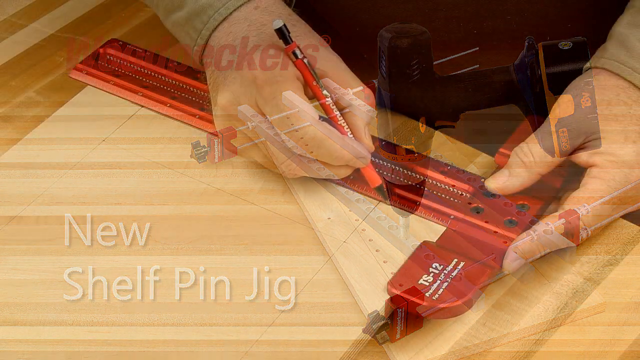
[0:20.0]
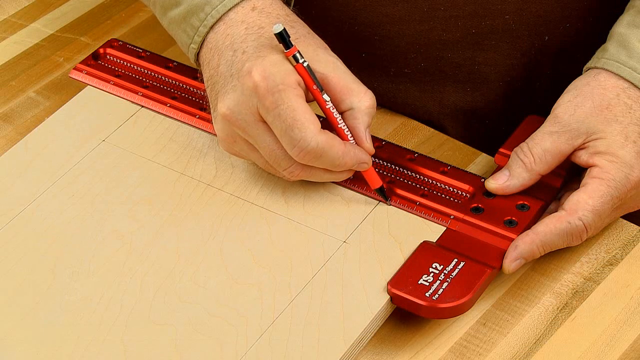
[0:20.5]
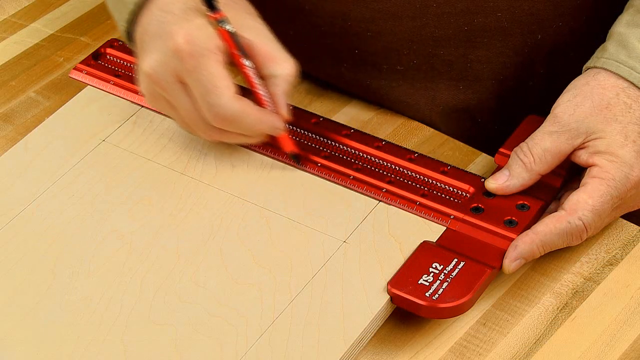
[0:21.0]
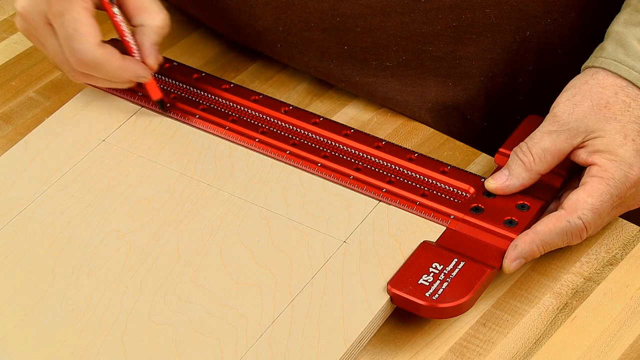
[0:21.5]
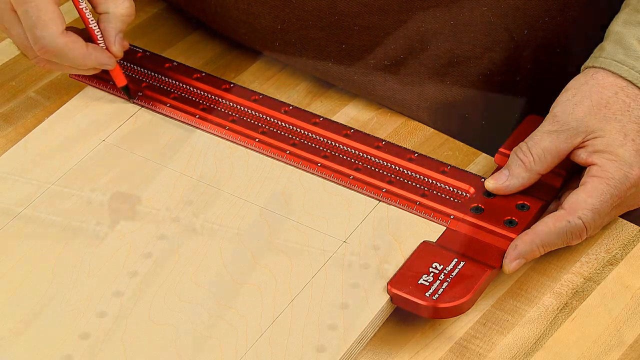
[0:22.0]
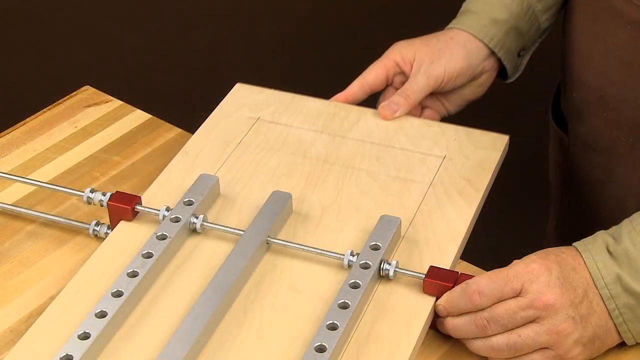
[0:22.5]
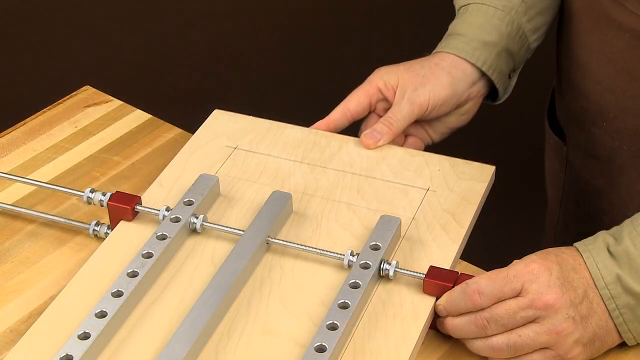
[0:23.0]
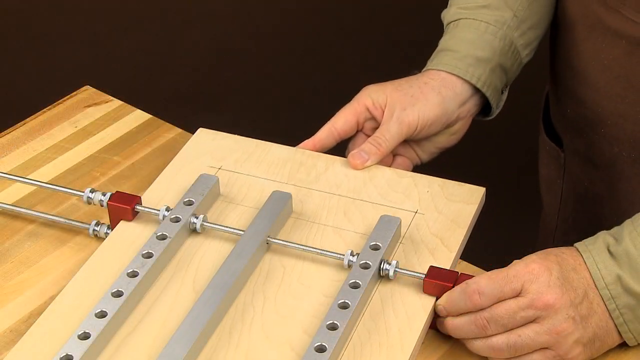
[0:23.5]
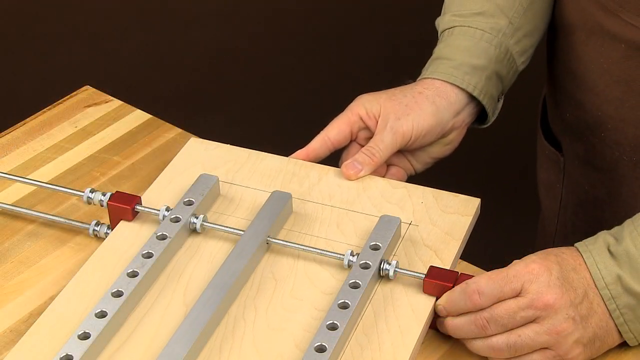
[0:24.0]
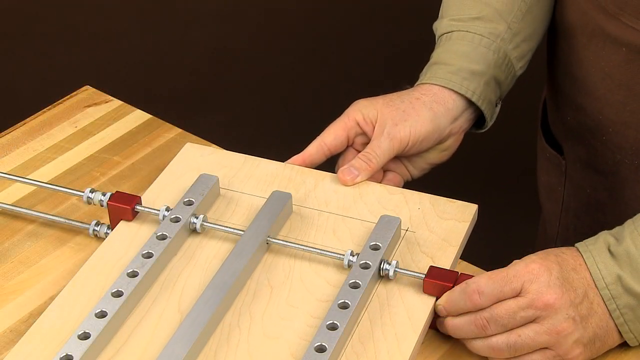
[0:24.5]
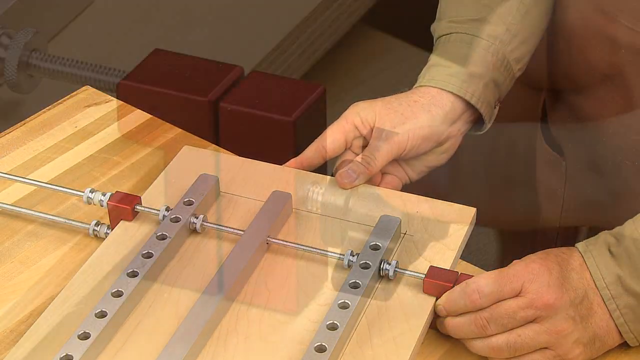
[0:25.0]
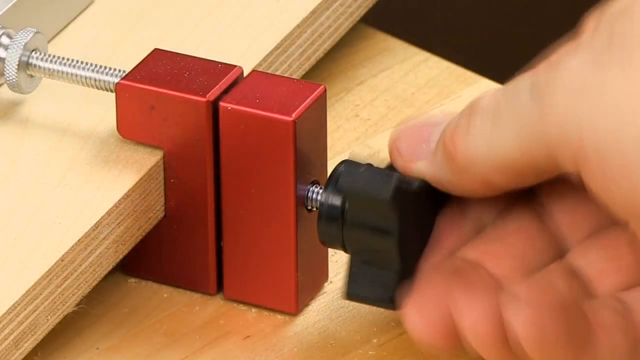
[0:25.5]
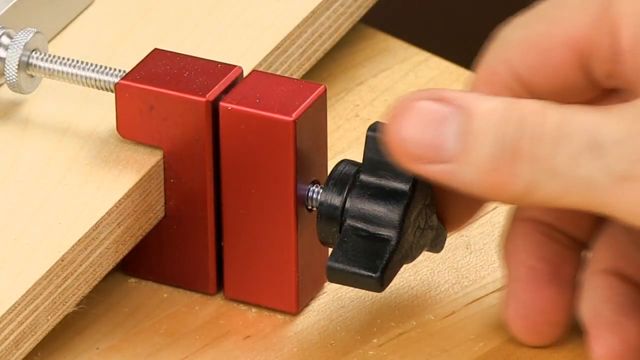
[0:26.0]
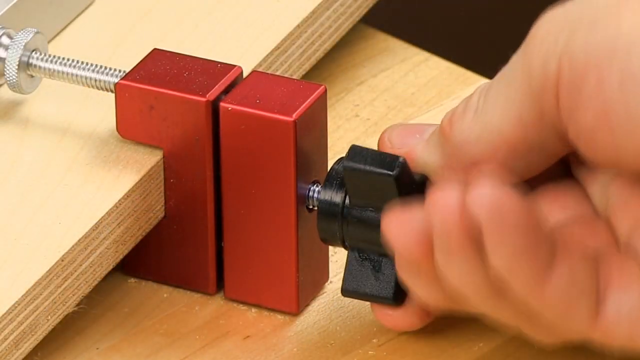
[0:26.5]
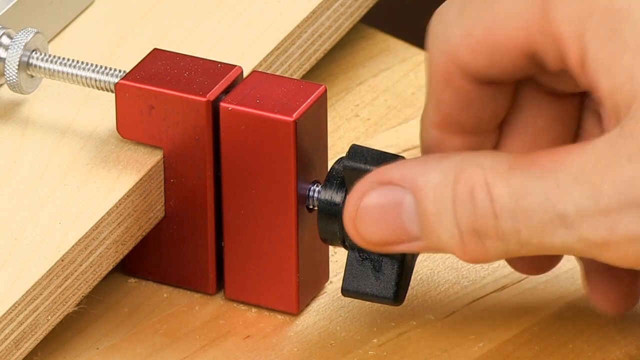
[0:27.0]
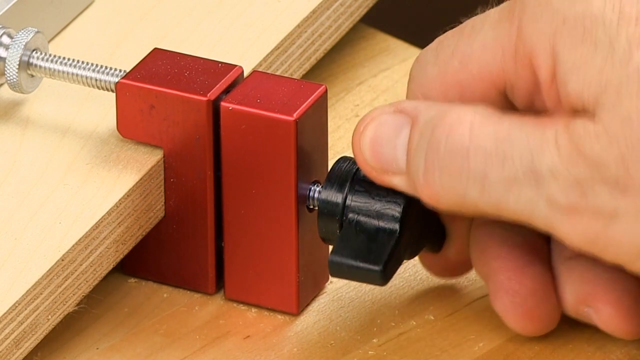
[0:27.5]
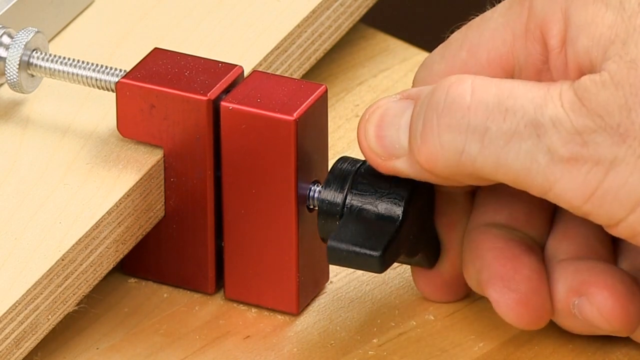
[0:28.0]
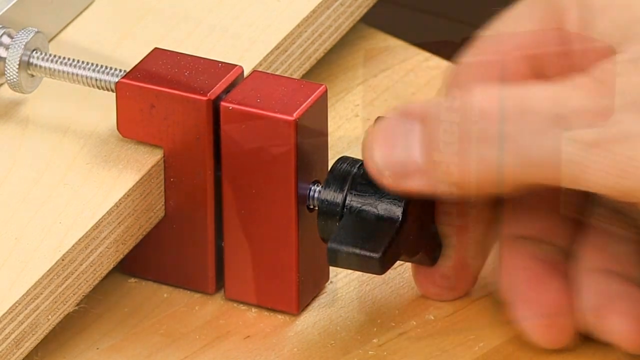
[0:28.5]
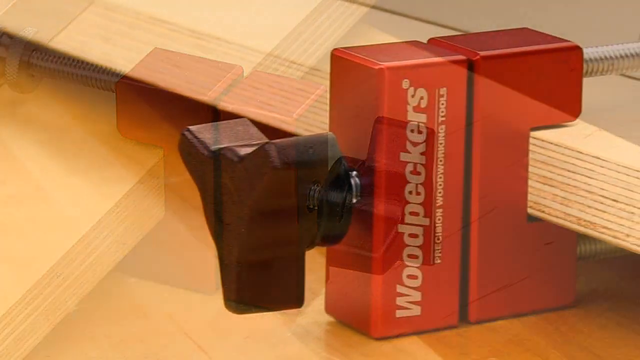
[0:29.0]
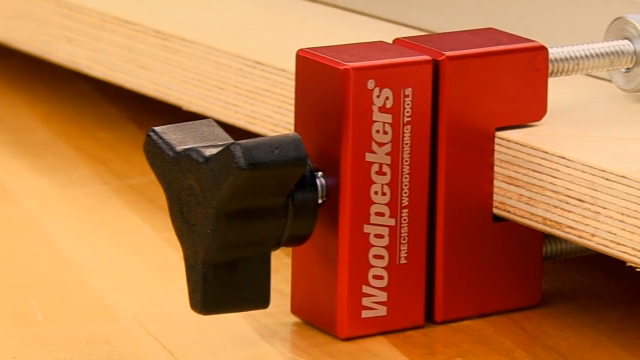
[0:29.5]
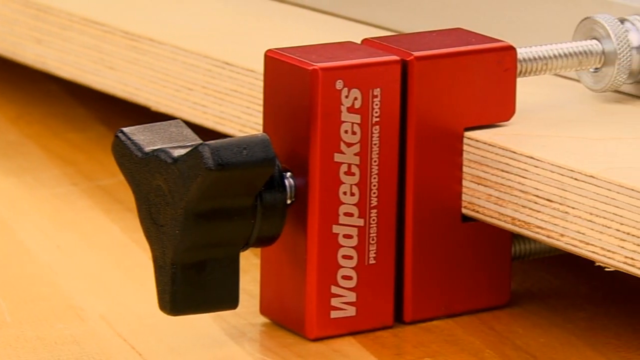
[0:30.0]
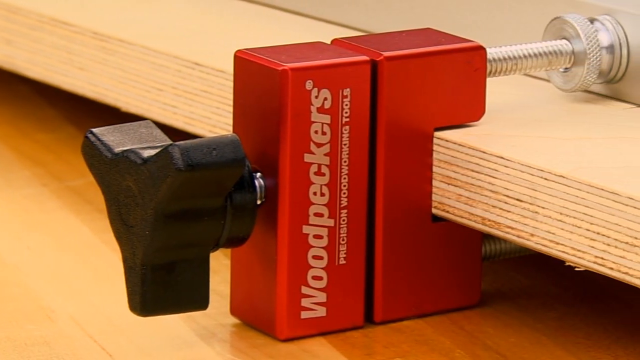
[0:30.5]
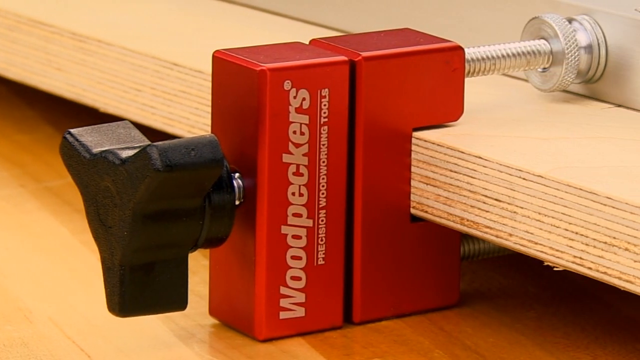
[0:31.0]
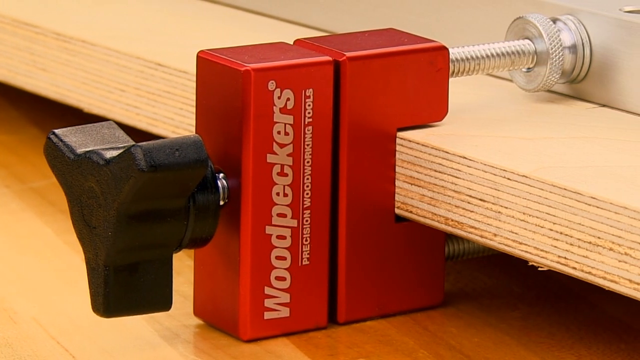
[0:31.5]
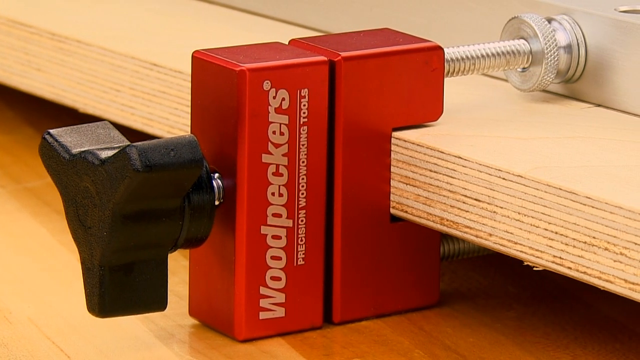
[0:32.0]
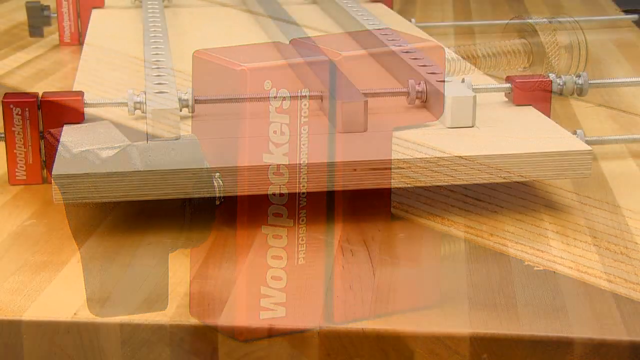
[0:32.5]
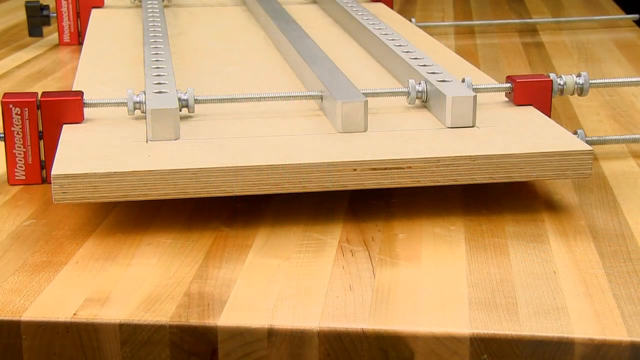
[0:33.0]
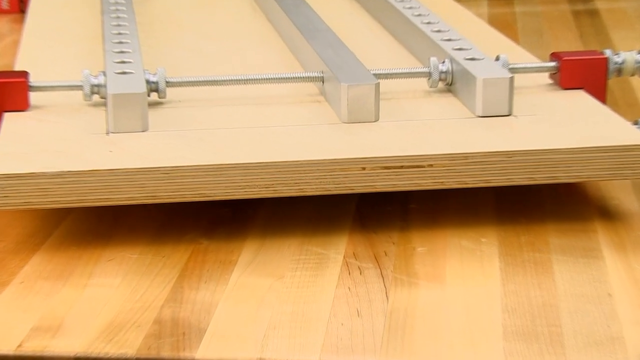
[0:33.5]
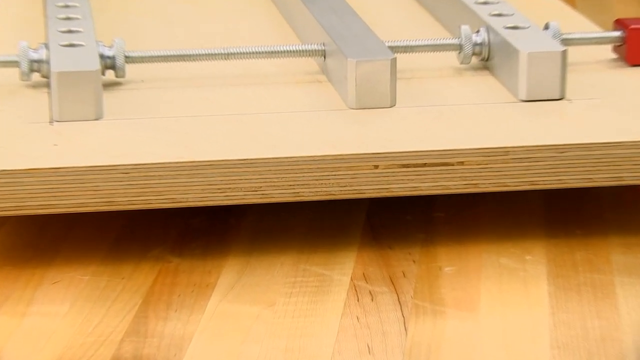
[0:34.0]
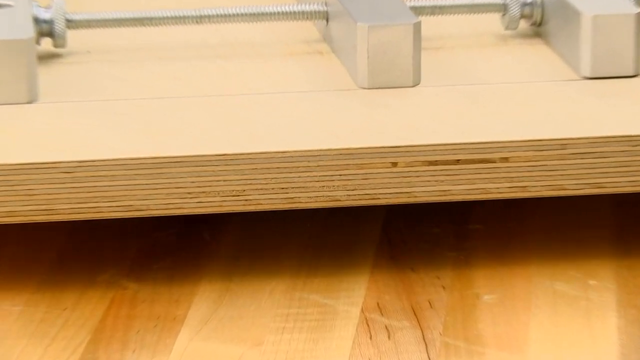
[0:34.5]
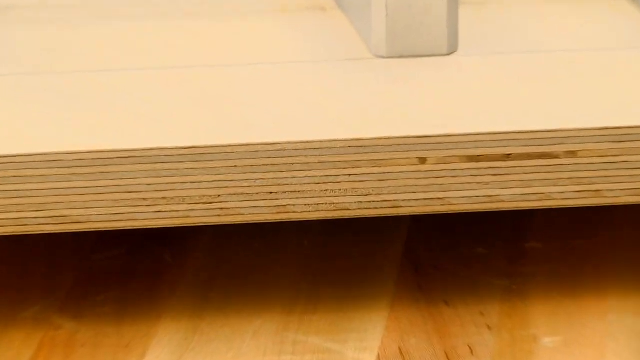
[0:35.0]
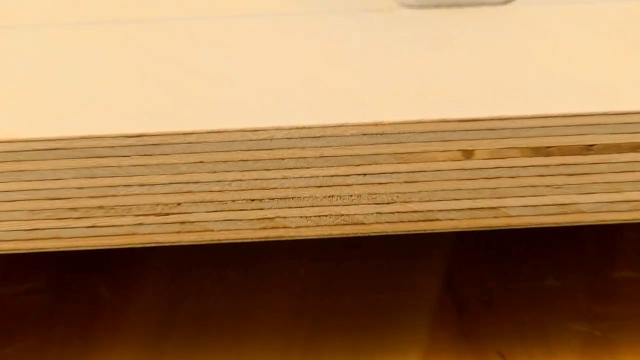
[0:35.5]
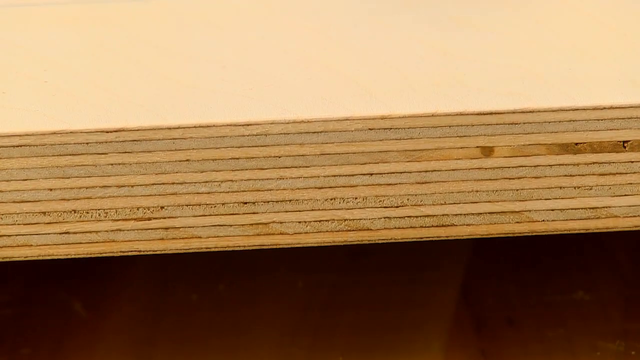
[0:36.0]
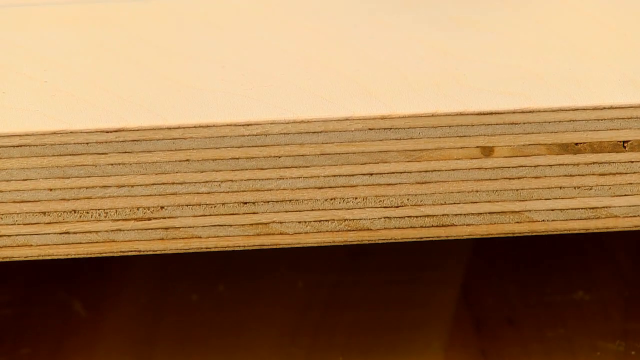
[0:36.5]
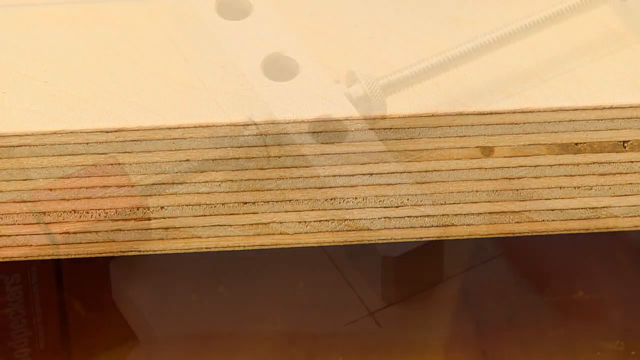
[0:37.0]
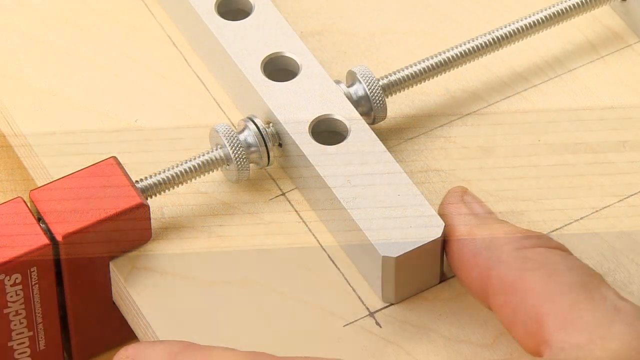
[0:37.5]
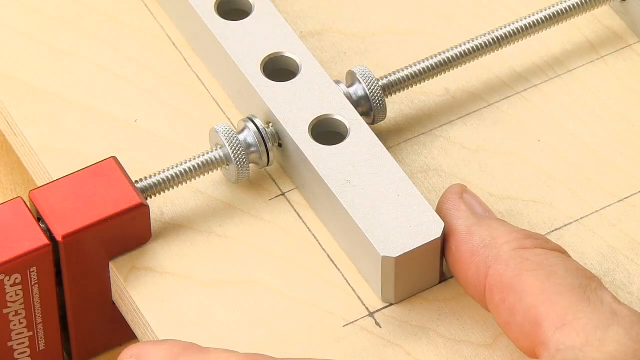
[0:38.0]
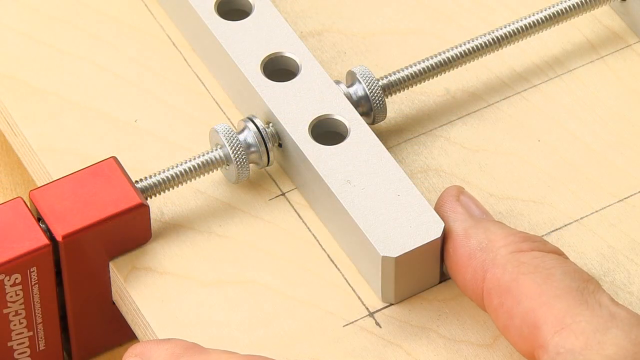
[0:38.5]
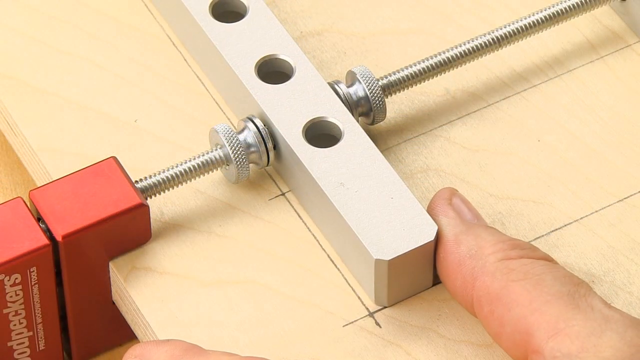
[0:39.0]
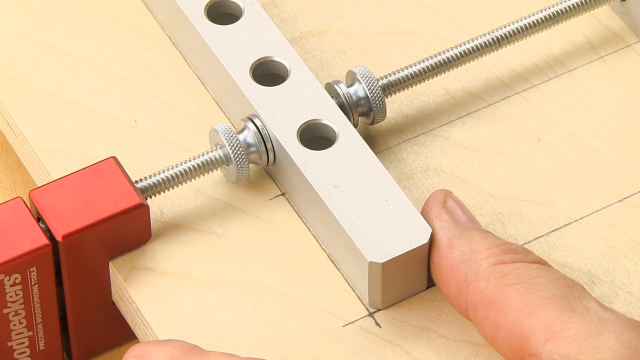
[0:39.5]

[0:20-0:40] A man uses a drawing tool to make straight lines, drawing on a piece of wood. He puts the jig down on it, plywood pieces are visible, and he moves the jig toward where he drew with what looks like some kind of square, squaring it up with the lines he drew. The jig is red metal where it clamps onto the wood, with a silver portion on top of the wood; the red portion holds the wood, with a C-clip, and it is held together with very long rods, almost like screws, that go through the whole thing. He can move it over precisely to line up the holes where they want to use the jig. "Woodpeckers" is written on the red portion, and the part where it screws down is black plastic. It is very close up: the man's hands and arms are visible, but not his face.